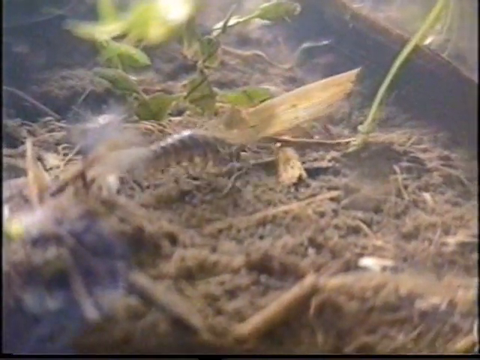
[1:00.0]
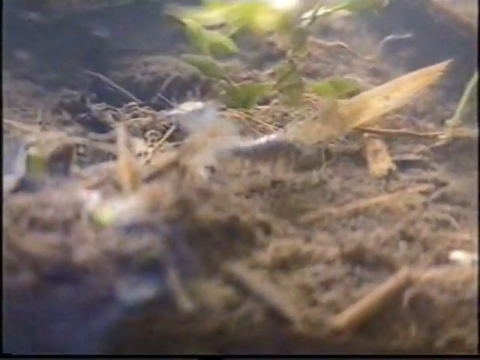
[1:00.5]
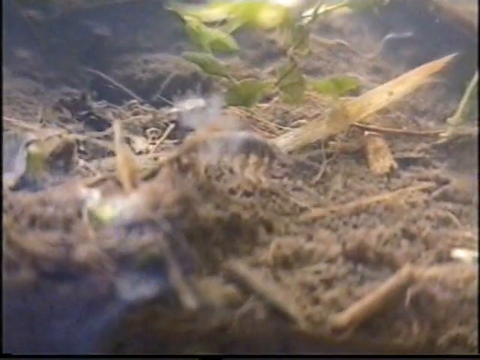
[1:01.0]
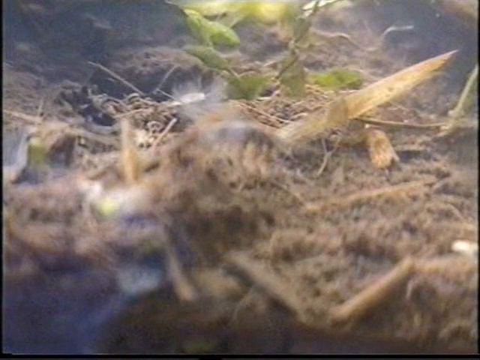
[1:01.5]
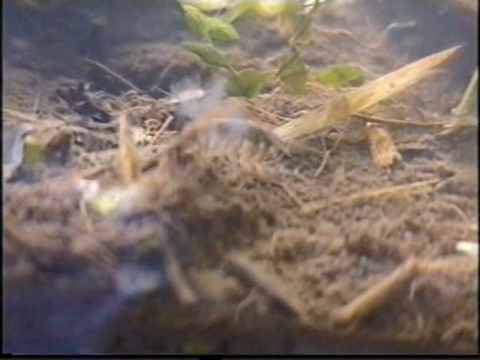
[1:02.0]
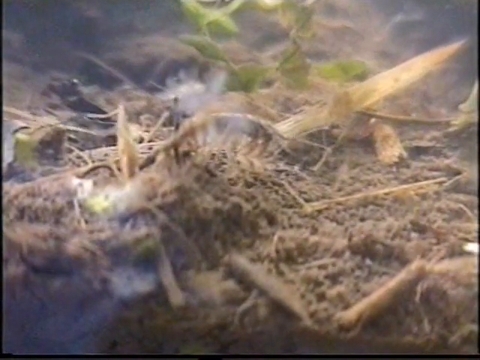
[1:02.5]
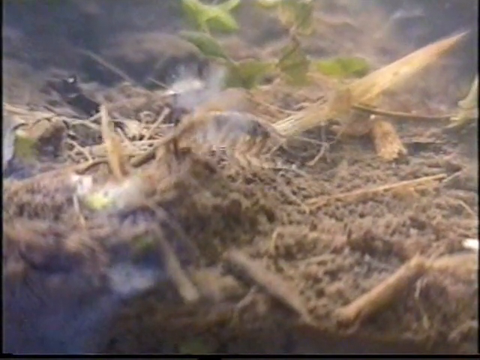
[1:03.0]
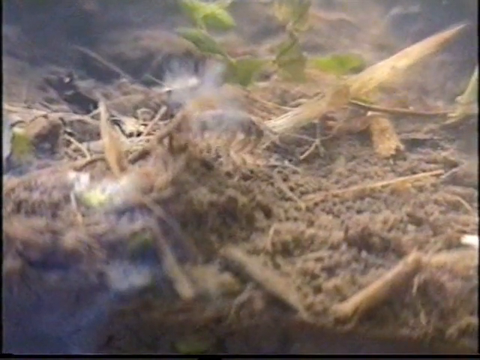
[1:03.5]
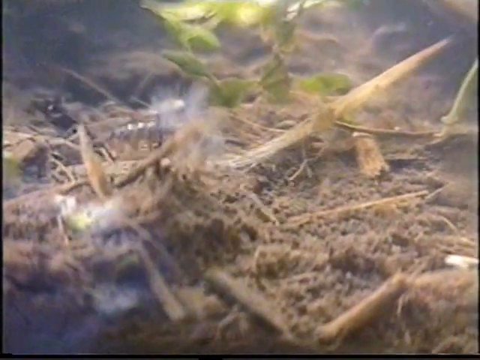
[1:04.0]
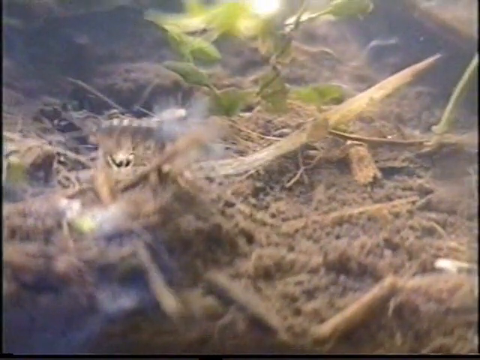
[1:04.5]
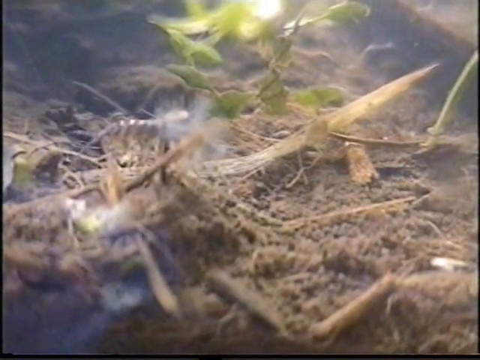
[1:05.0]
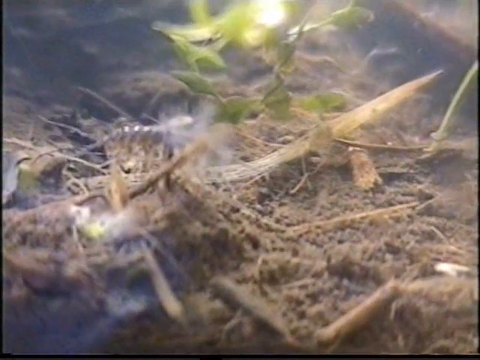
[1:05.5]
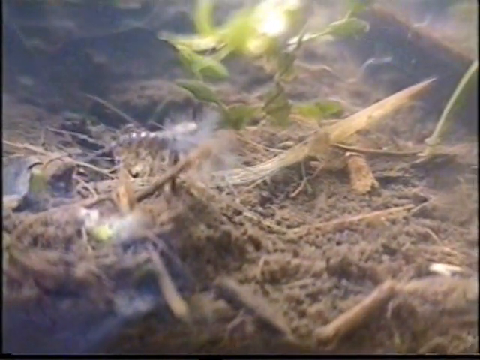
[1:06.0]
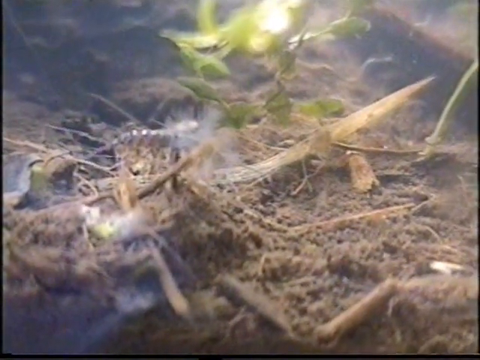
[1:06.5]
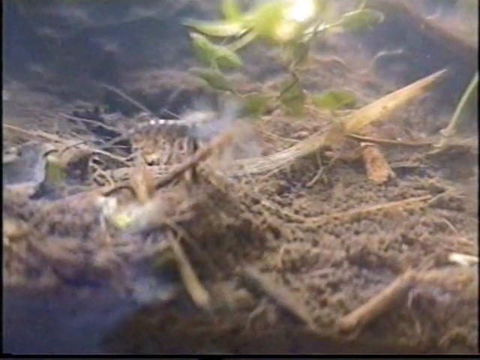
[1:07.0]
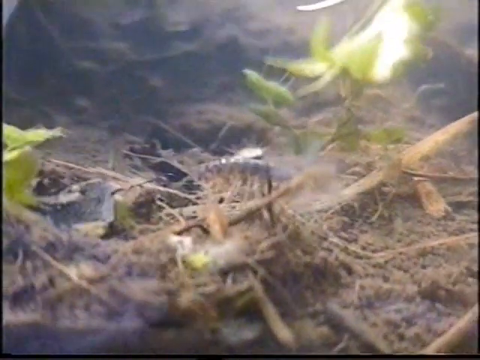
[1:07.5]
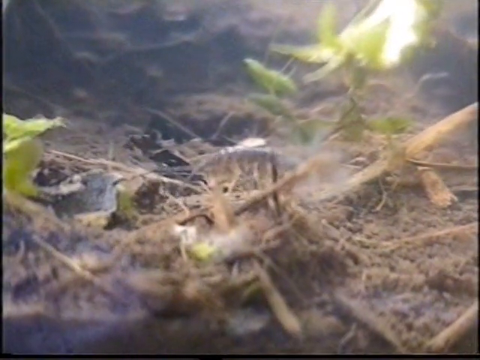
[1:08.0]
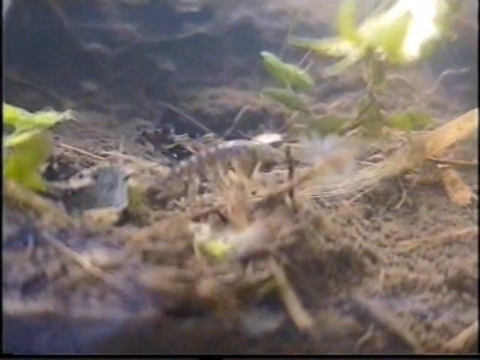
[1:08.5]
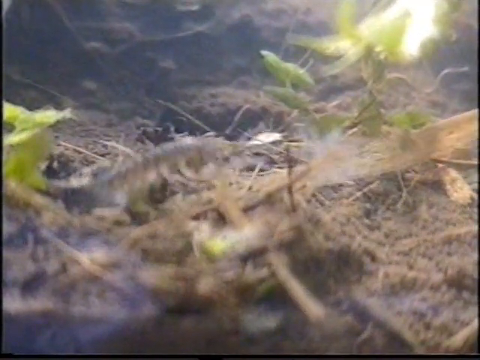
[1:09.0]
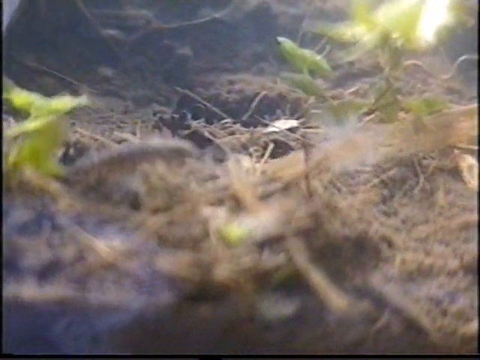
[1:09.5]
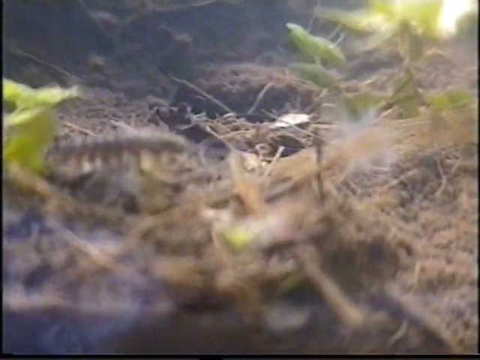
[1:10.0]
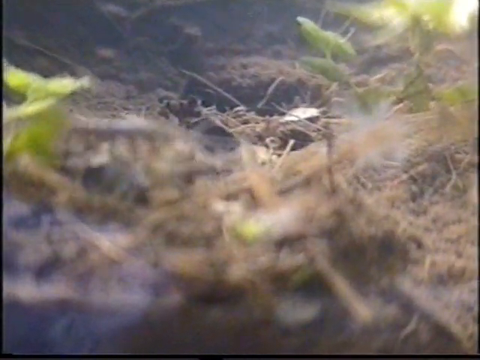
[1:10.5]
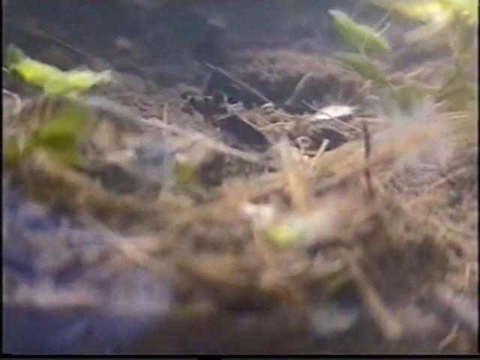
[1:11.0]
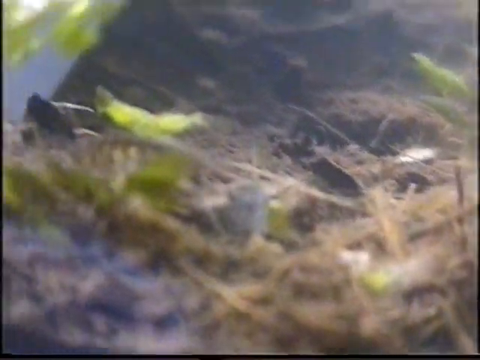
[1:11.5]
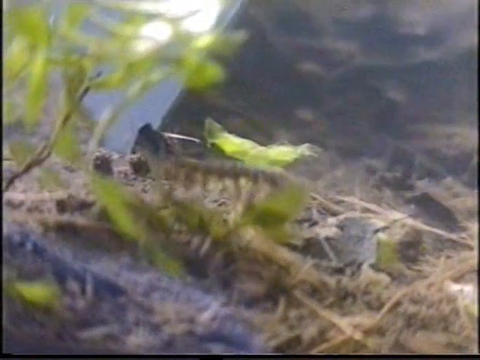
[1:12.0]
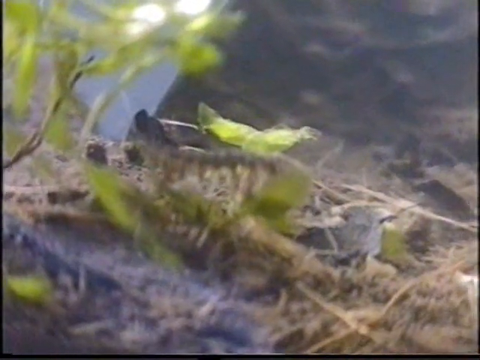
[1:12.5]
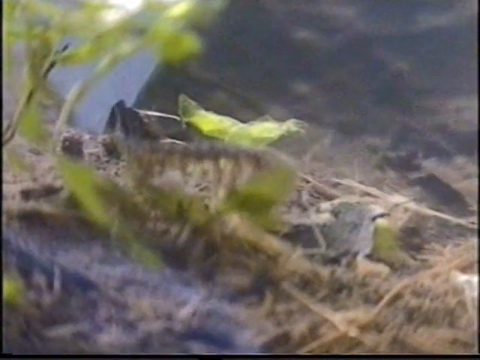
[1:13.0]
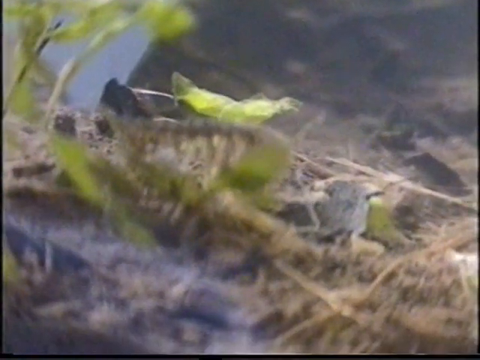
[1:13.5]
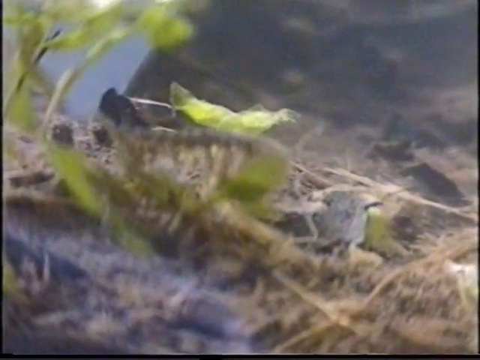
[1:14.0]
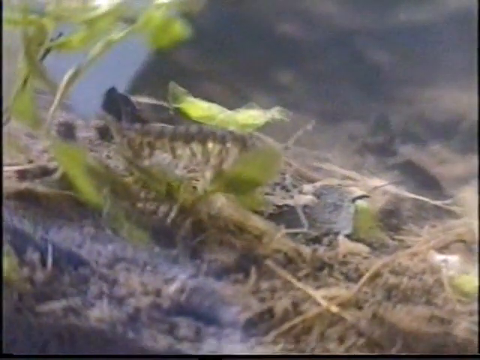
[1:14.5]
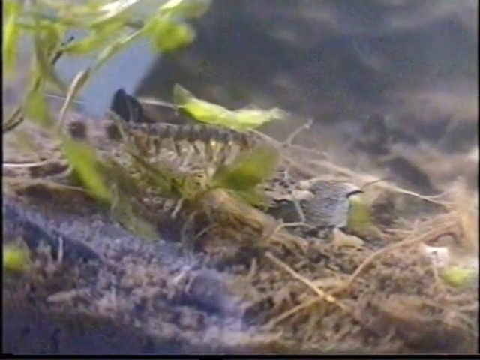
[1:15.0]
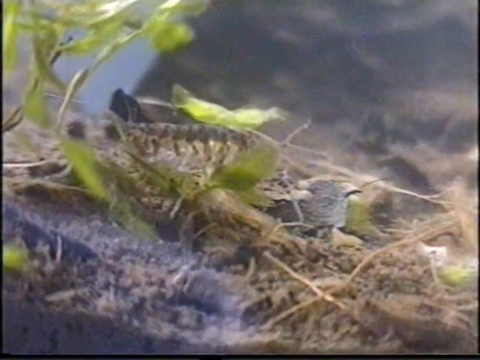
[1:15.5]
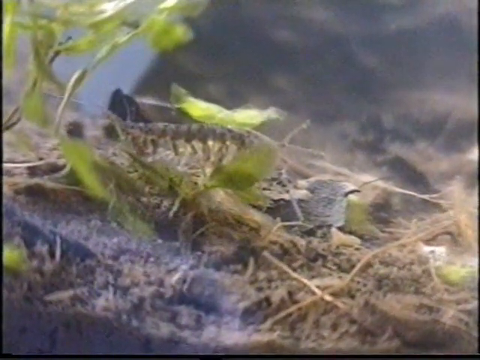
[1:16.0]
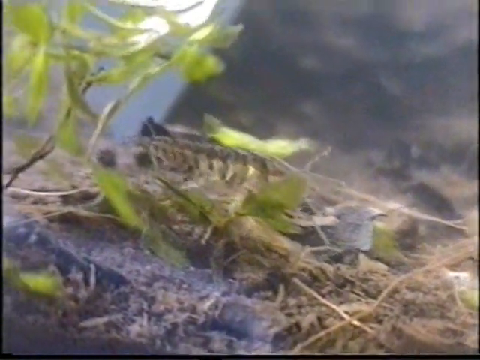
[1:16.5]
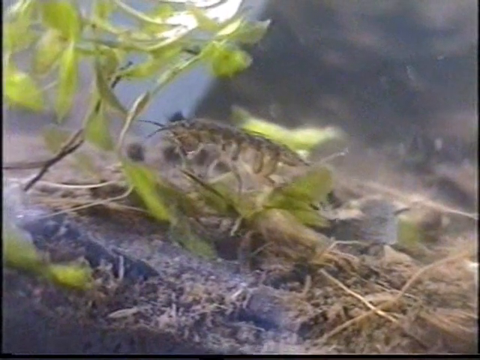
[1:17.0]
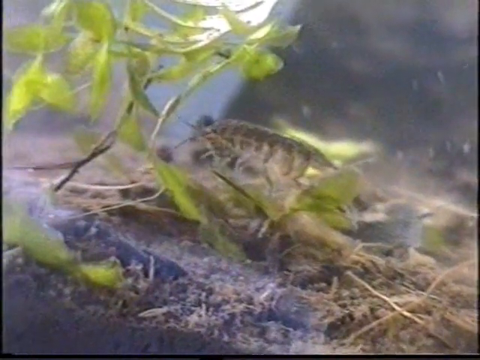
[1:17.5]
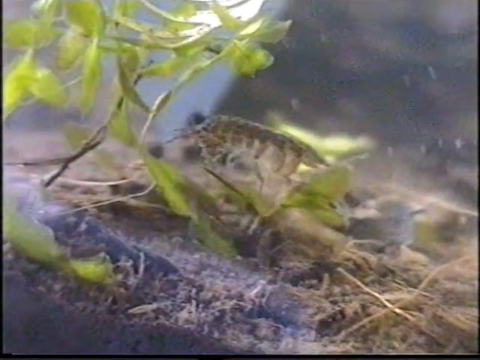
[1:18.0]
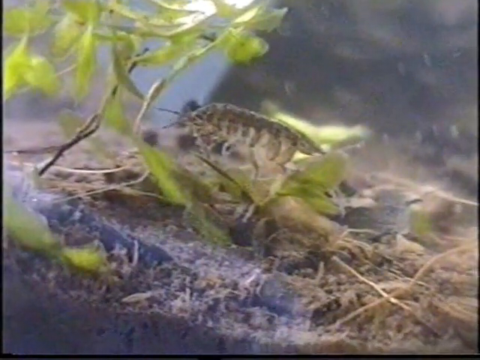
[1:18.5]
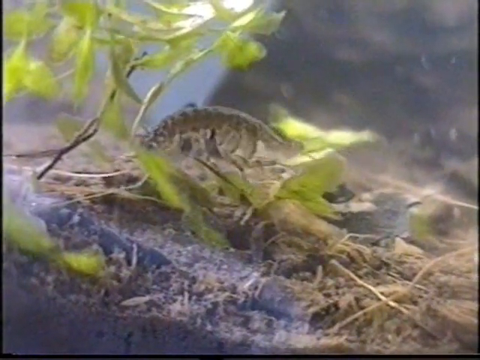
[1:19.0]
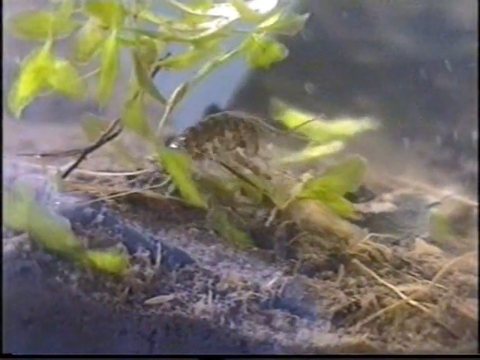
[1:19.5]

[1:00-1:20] The pill bug moves along the bottom of the container as if searching and exploring. It is very long, with about 10 legs on each side of its body; the legs are a light beige color and very long. The bug also has very long antennas, and one of its eyes is visible on its side. At the bottom it is kind of hiding within the debris in the tank. There is greenery as well, with a little more greenery on the ground. The water looks a little cloudy, but what is going on inside the tank is still visible.